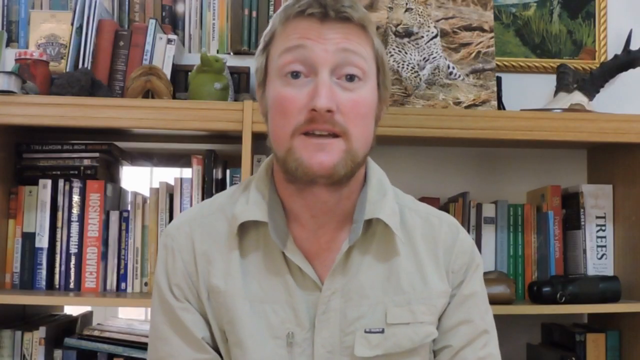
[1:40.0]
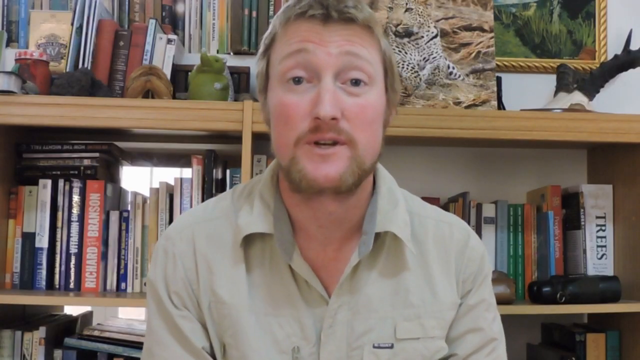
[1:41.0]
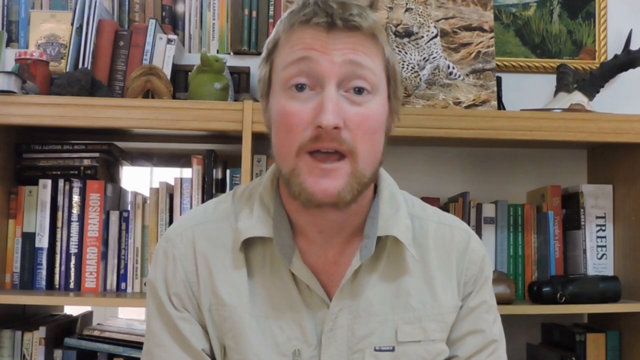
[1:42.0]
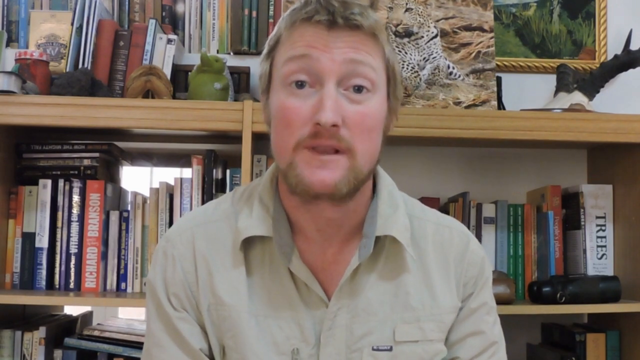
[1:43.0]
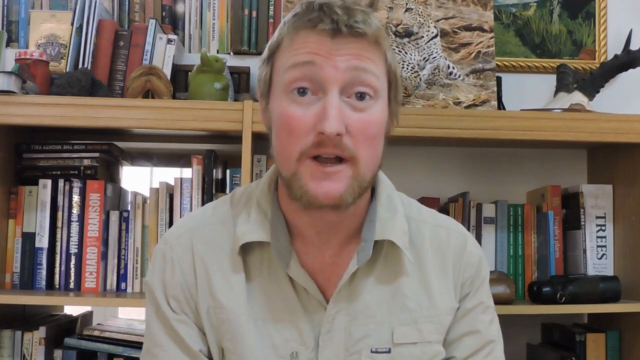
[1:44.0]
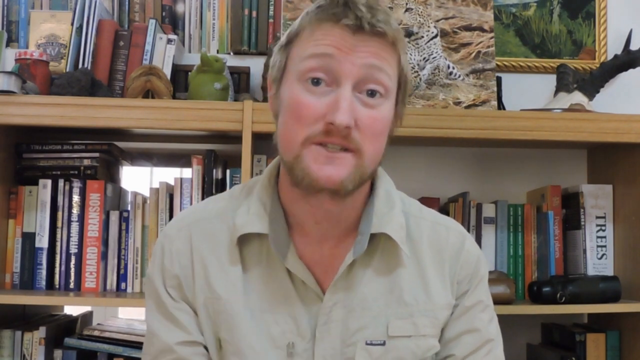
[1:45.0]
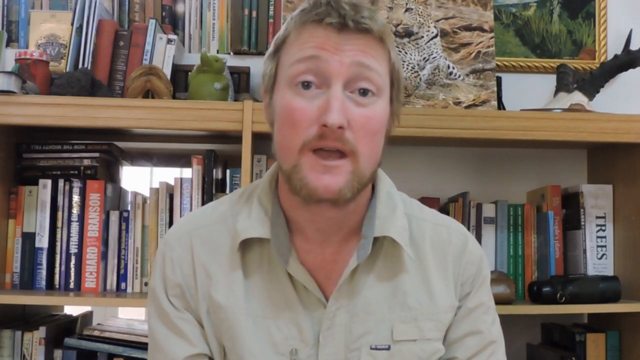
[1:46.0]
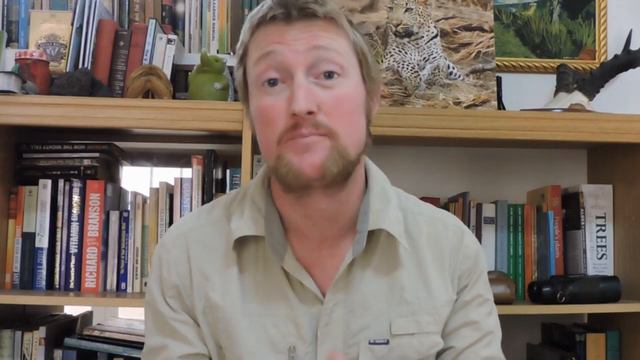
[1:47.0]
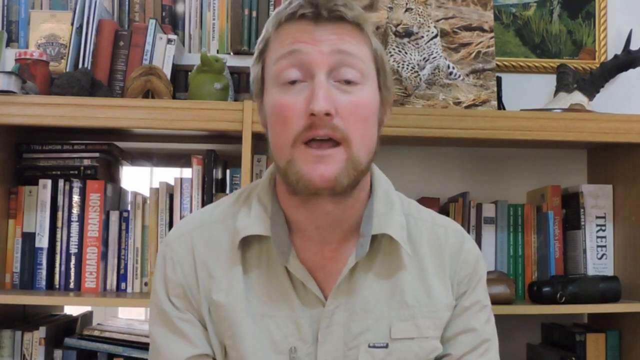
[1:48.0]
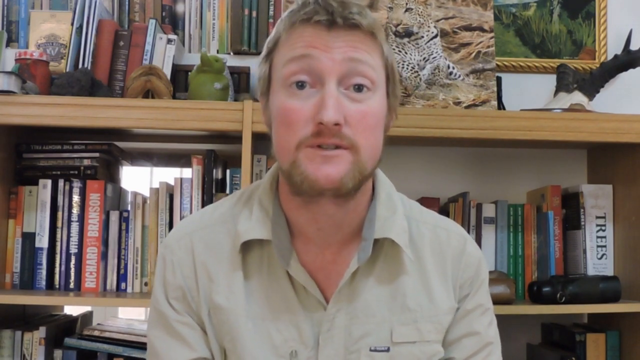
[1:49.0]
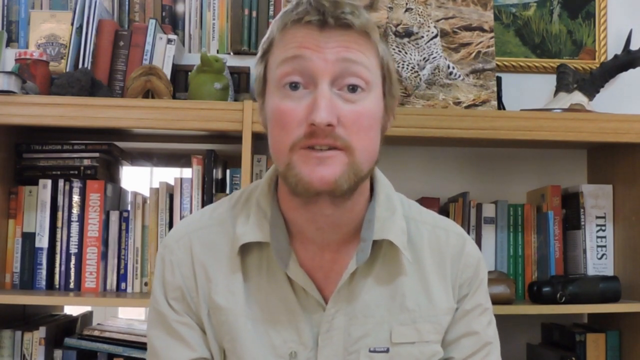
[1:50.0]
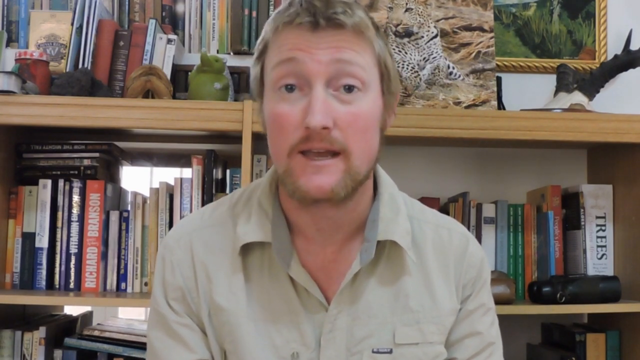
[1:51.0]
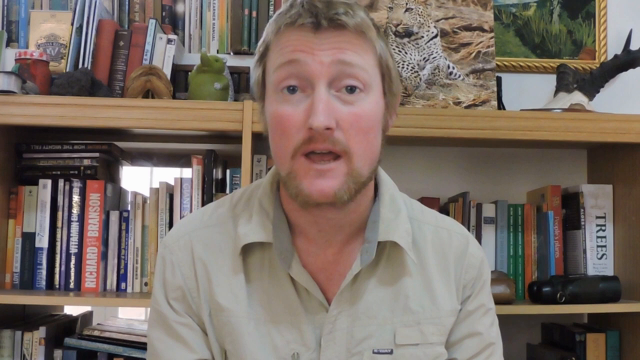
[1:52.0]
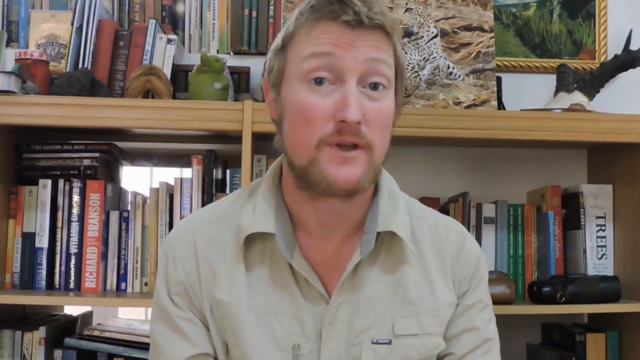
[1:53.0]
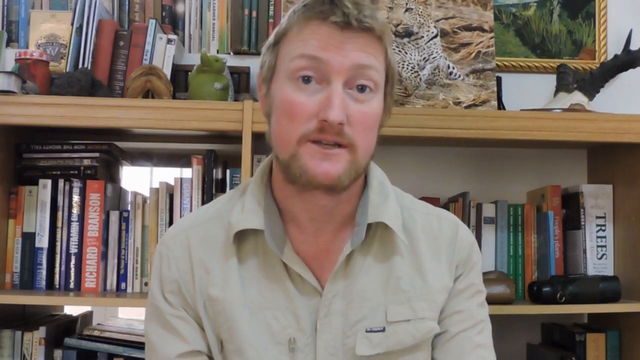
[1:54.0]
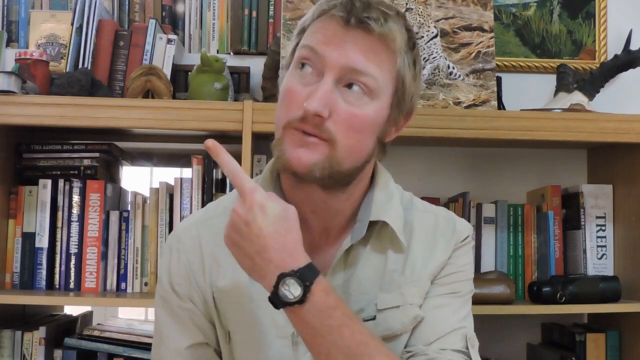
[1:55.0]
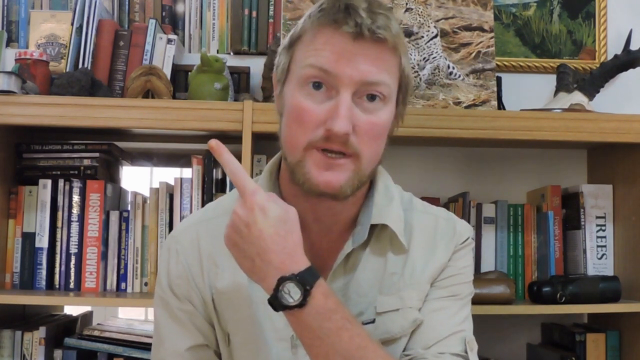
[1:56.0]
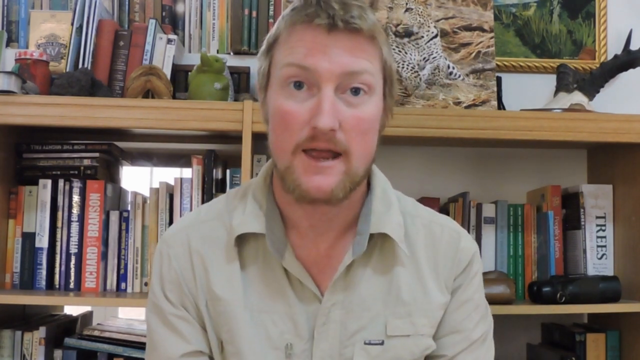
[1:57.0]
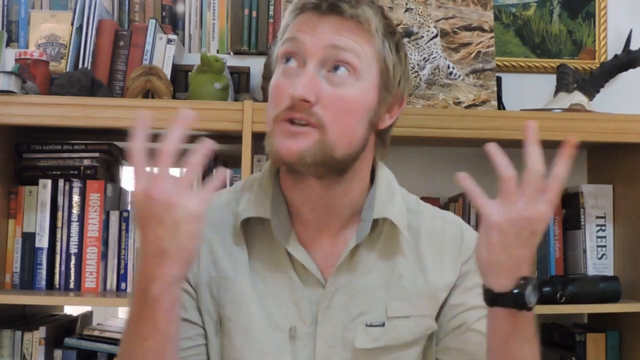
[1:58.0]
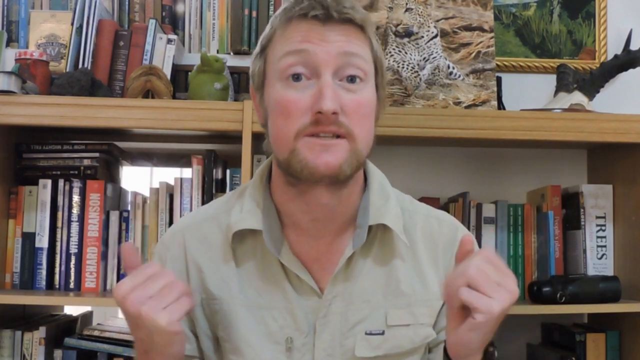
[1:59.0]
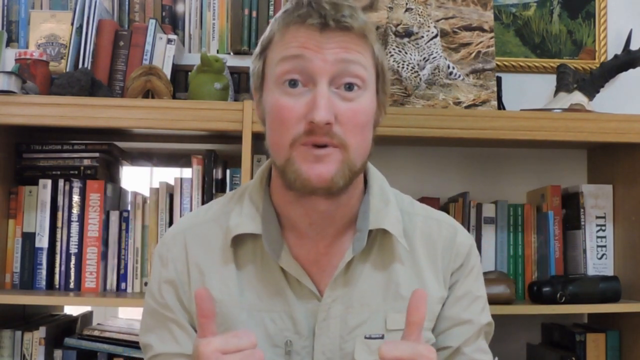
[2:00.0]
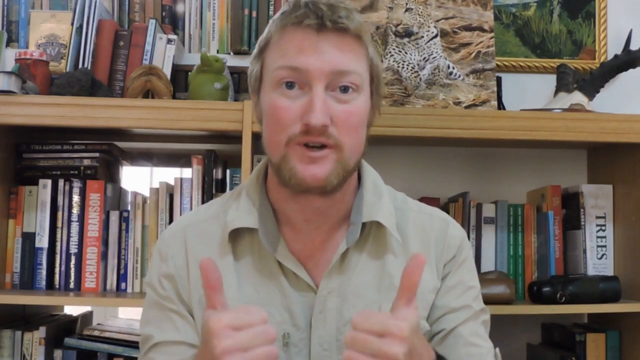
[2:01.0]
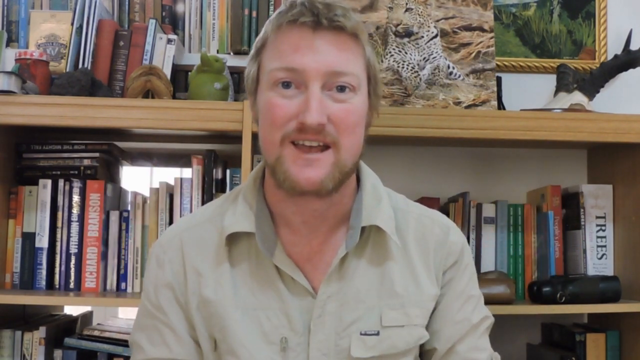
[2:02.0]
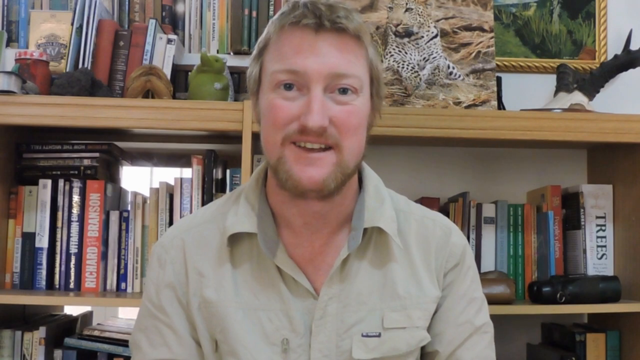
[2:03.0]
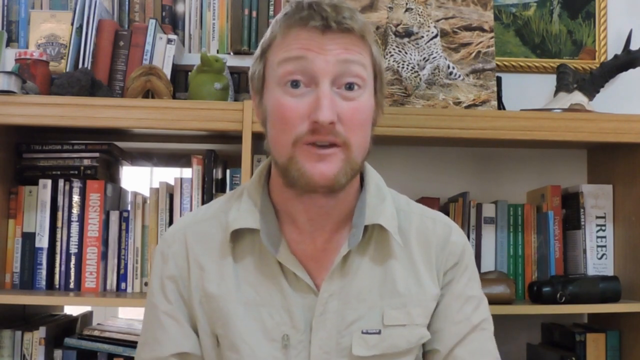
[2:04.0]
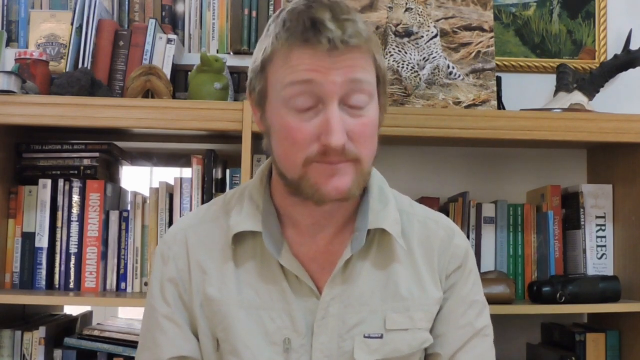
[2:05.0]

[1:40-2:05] The same man continues talking. As he talks, he sometimes raises his eyebrows, and he shrugs his right shoulder. At one point he moves his left pointer finger across his right shoulder and points over it, seemingly at something possibly on the shelf behind him. He also uses his other pointer finger to point downward. At the end, he gives a thumbs up with both hands while smiling, then tilts his head slightly towards the left side.